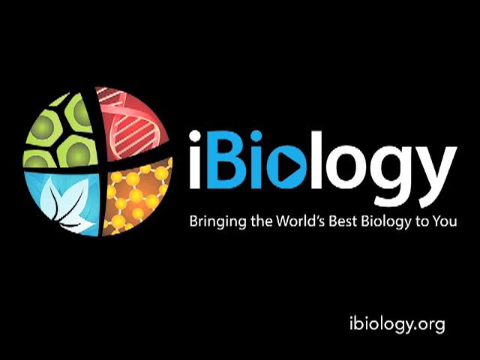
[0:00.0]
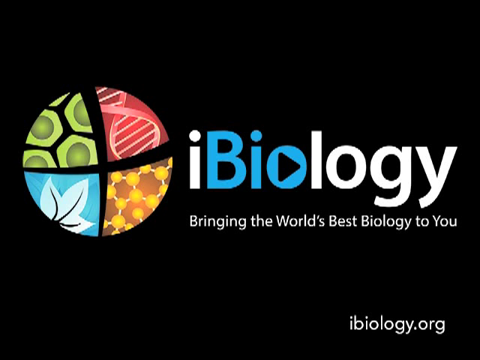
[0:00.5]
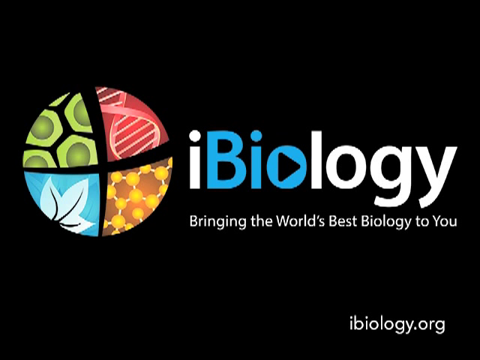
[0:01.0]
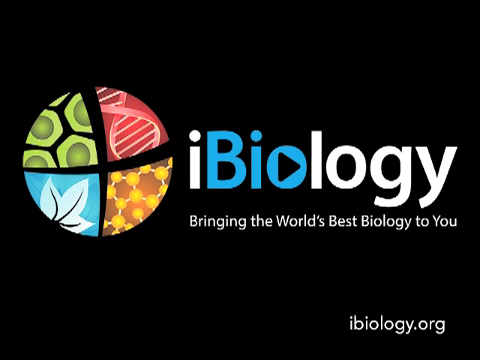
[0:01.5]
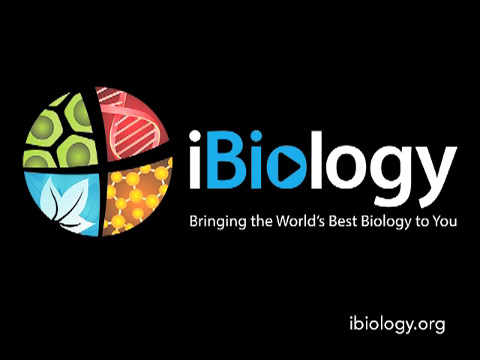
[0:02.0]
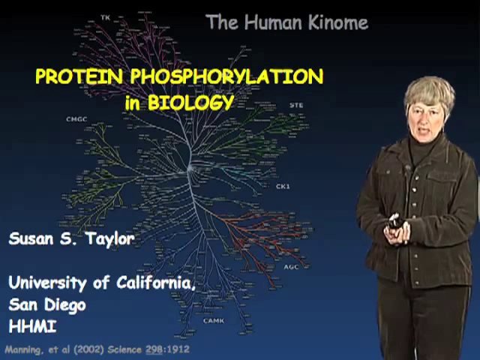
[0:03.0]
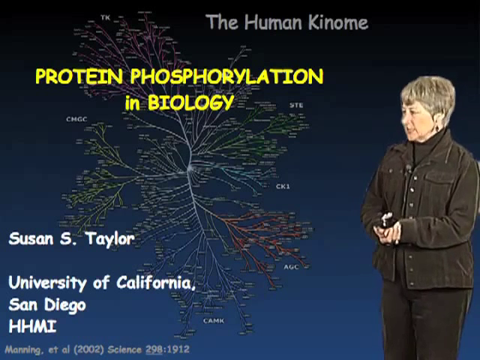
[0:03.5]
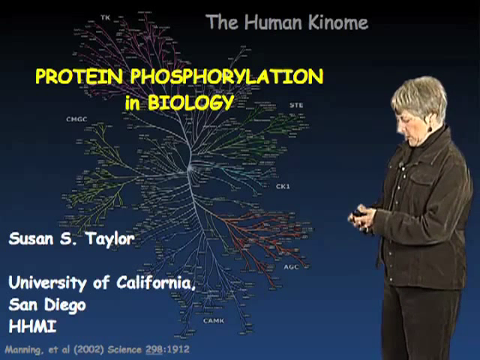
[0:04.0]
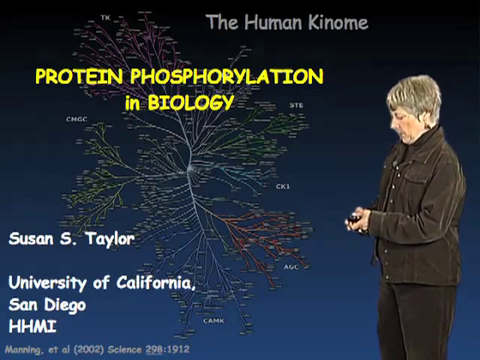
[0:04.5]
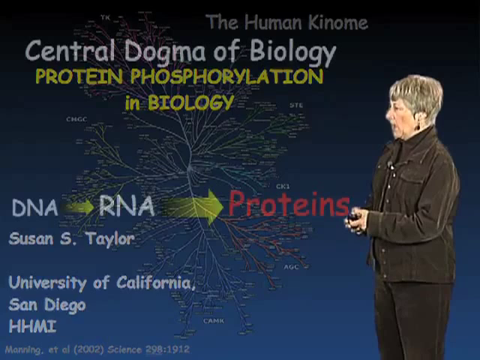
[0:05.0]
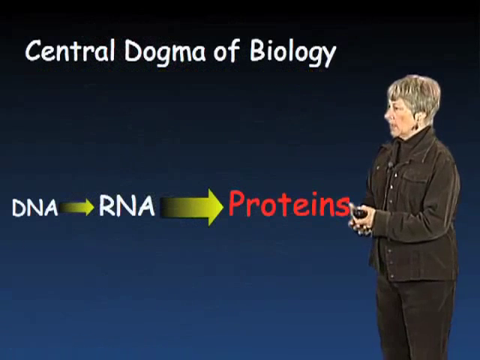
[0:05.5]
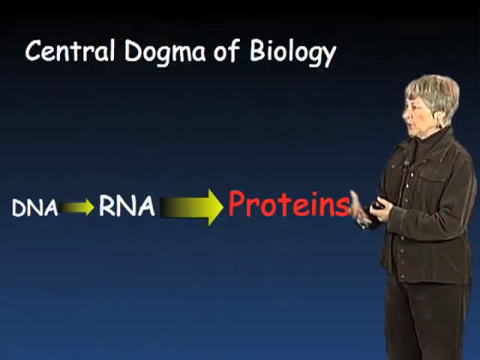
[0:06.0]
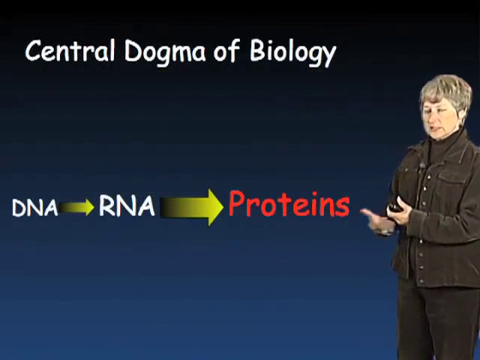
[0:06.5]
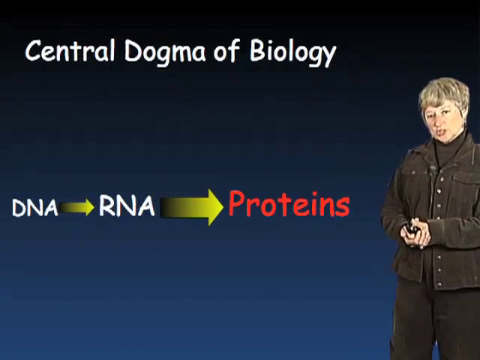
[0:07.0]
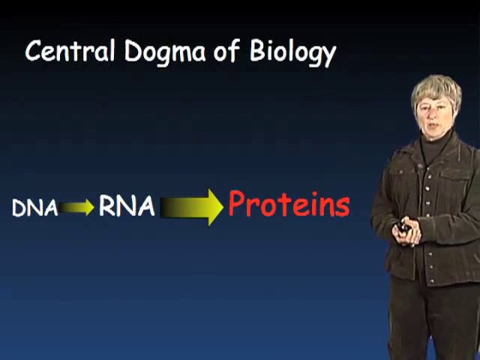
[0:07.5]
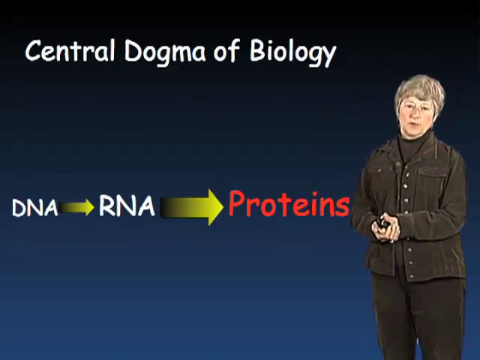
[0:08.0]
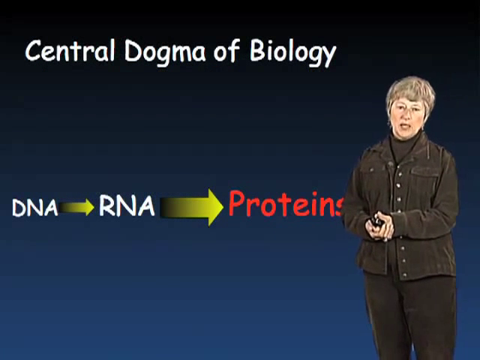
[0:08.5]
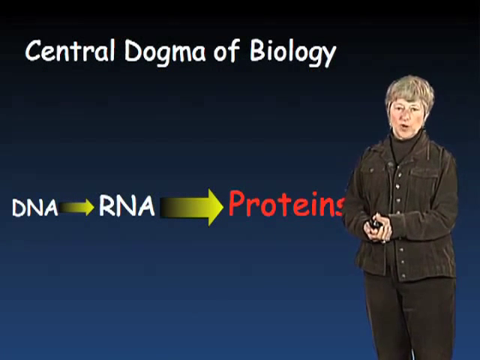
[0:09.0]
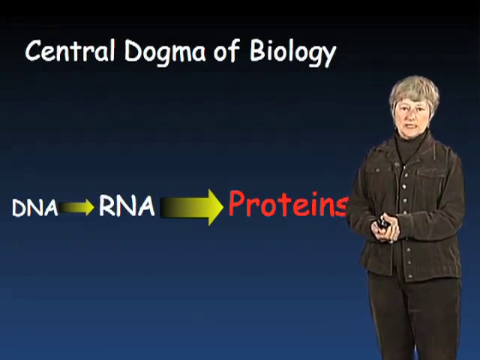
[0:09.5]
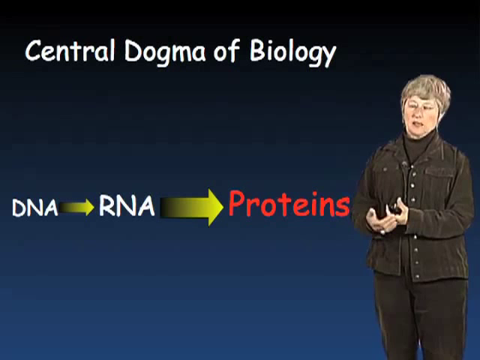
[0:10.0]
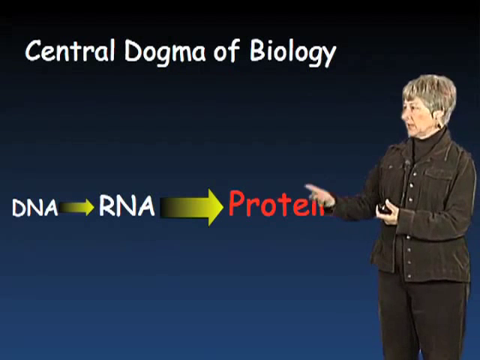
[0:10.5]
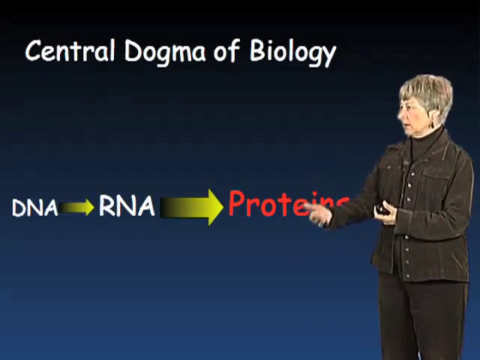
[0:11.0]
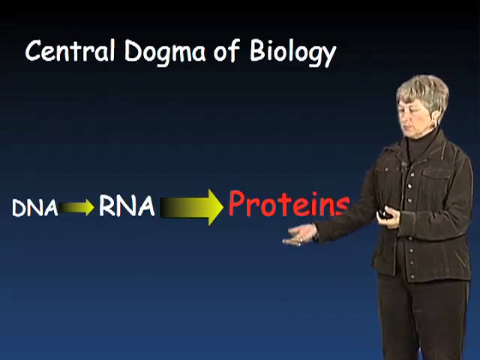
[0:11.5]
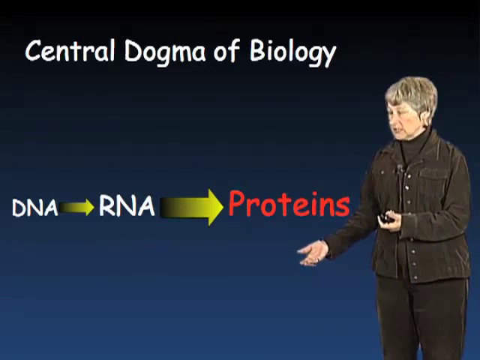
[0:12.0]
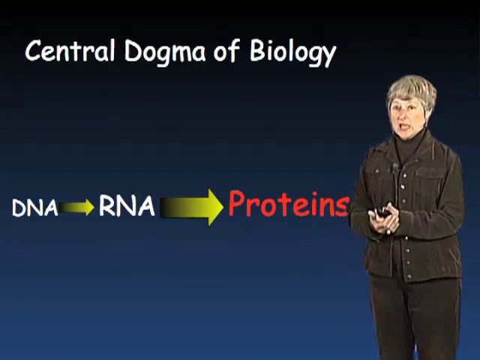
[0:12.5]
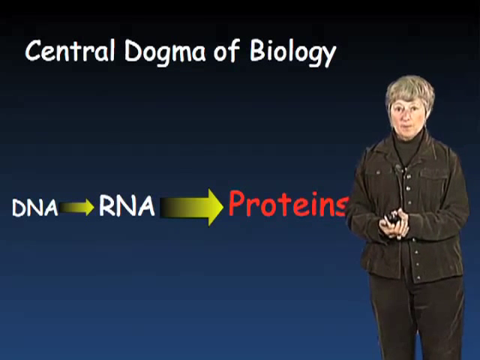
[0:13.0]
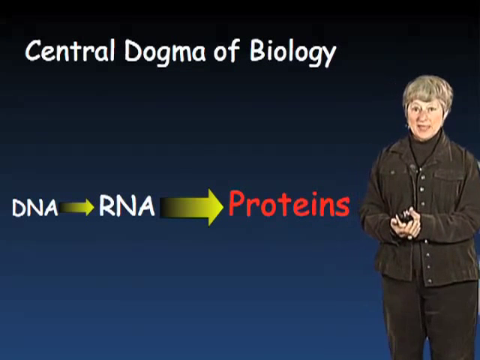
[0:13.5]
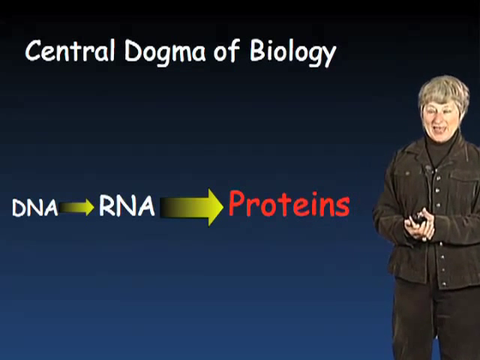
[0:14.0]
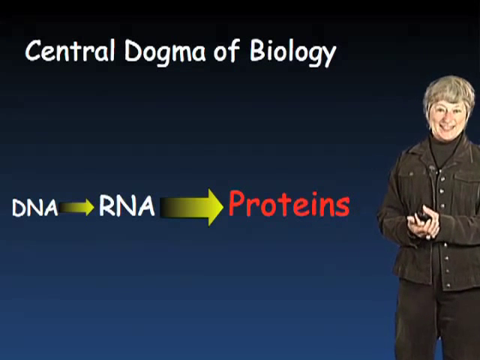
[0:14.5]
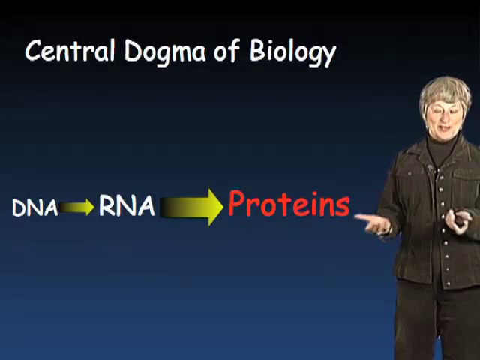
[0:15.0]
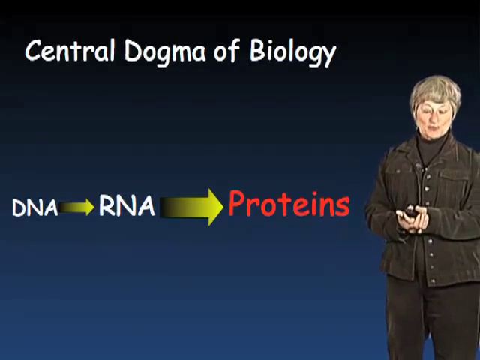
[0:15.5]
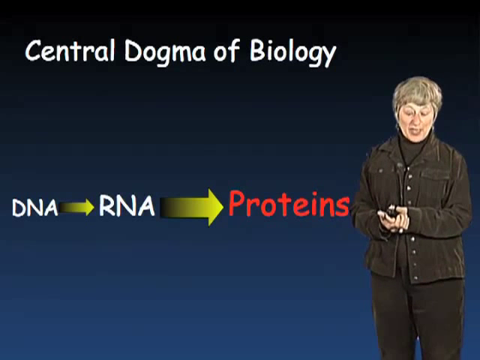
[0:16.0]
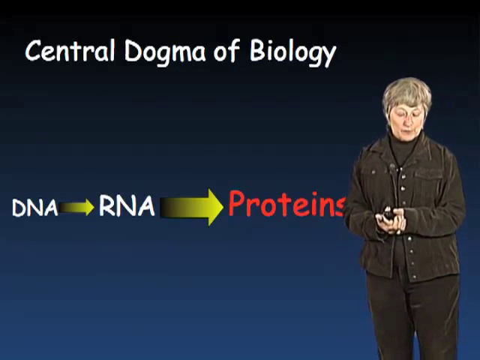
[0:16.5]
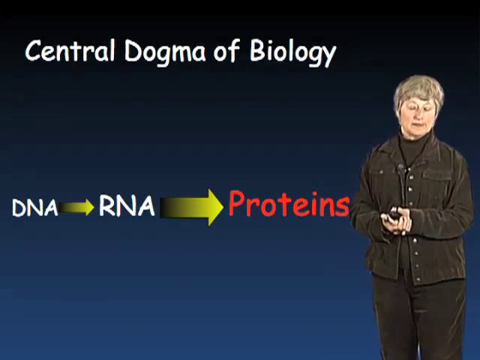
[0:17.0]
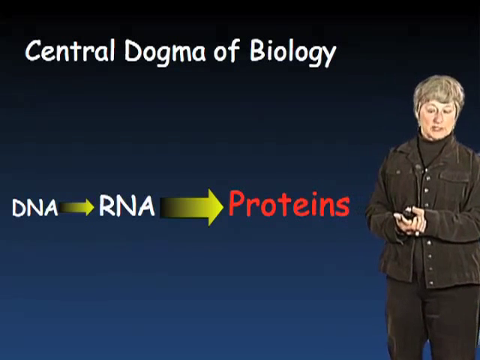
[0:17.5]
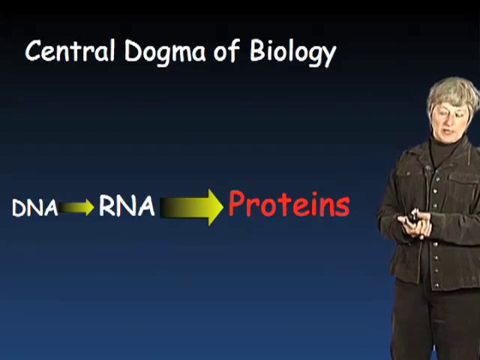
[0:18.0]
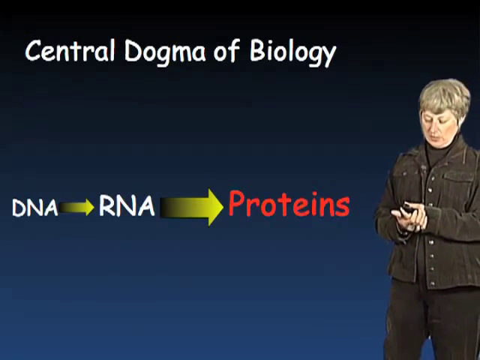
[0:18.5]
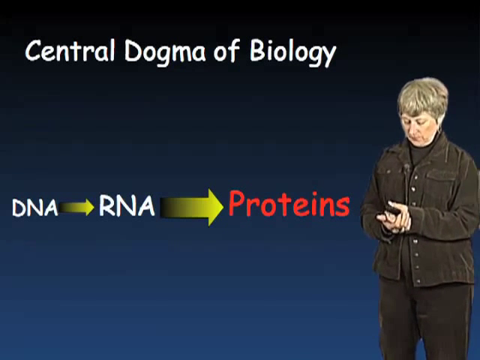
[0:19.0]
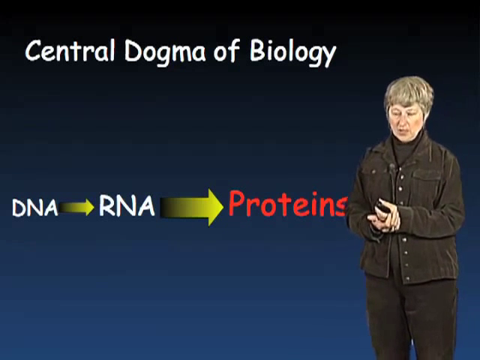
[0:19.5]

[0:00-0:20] The video opens on a black screen. On the left, in the center of the screen, is a circle divided into four parts: the top left part has green octagons, the right part has red ellipses, the bottom left part has a blue background with a white flower, and the bottom right part has a yellow background with brown shapes. Beside the circle, in the center of the screen, is the text "iBiology, bringing the world's best biology to you." A new page follows, with "the human genome" at the top, then the text "protein phosphorylation in biology" in yellow. The bottom left corner reads "Susan S. Taylor, University of California, San Diego." In the right corner of the screen is Susan Taylor, a Caucasian woman with short gray hair, wearing a gray button-down shirt with a gray turtleneck underneath and gray pants. She begins talking, and the screen changes to read "Central Dogma of Biology, DNA to RNA to Proteins." She gestures and smiles at the camera as she speaks.